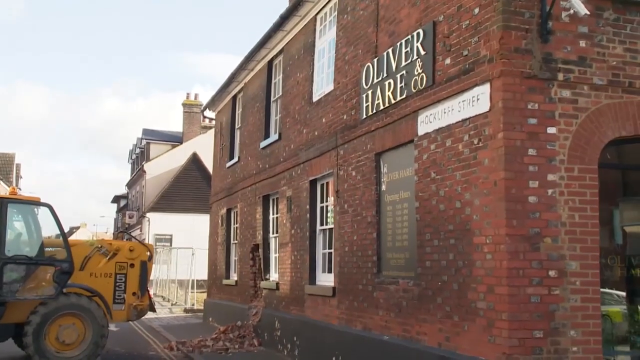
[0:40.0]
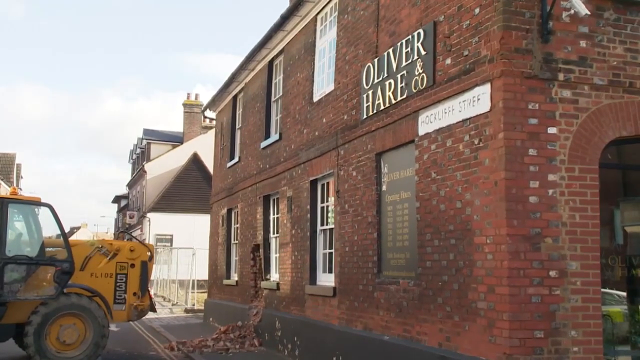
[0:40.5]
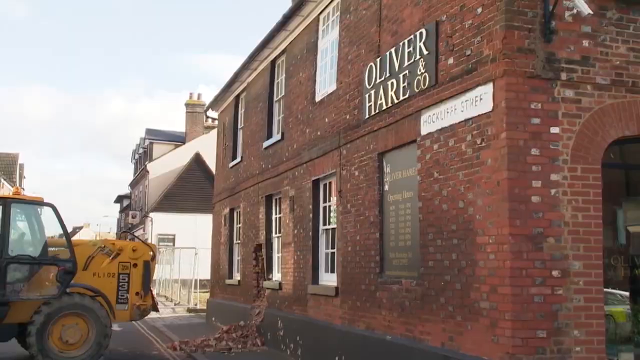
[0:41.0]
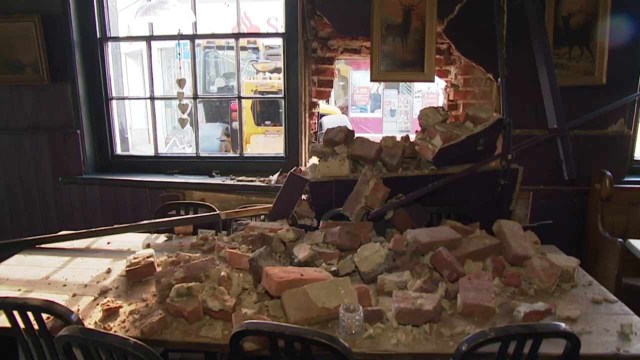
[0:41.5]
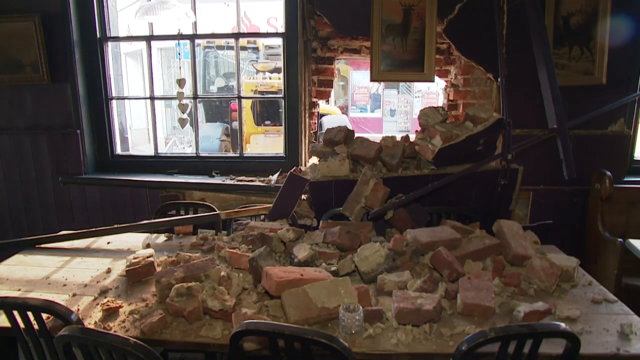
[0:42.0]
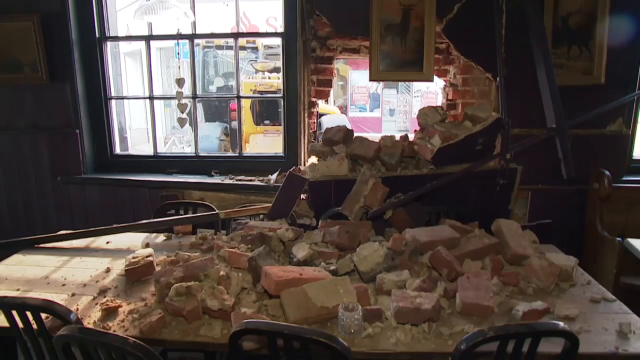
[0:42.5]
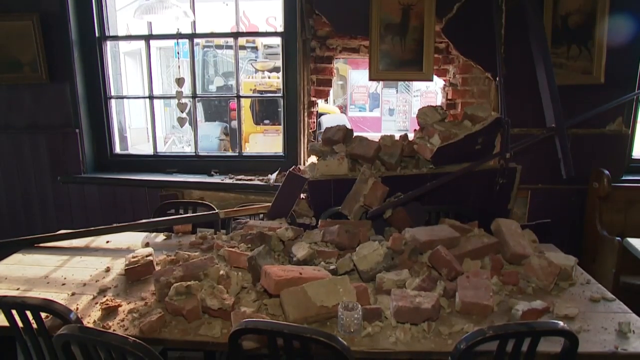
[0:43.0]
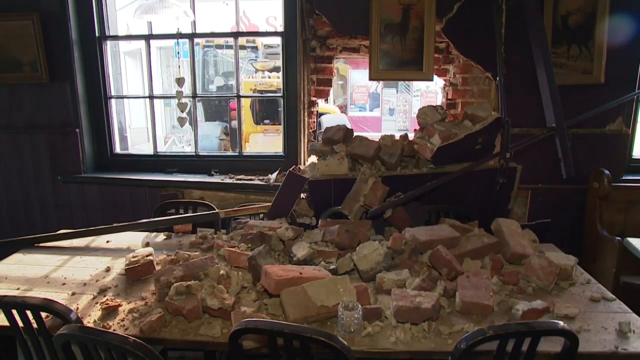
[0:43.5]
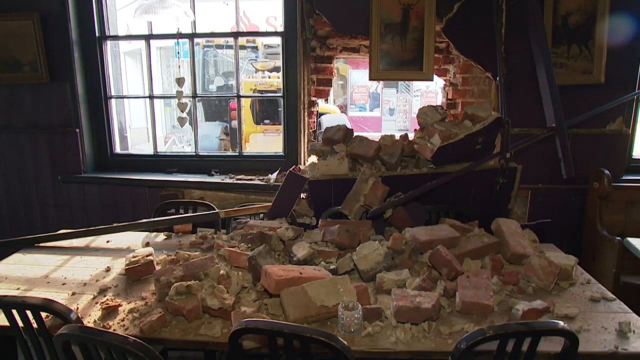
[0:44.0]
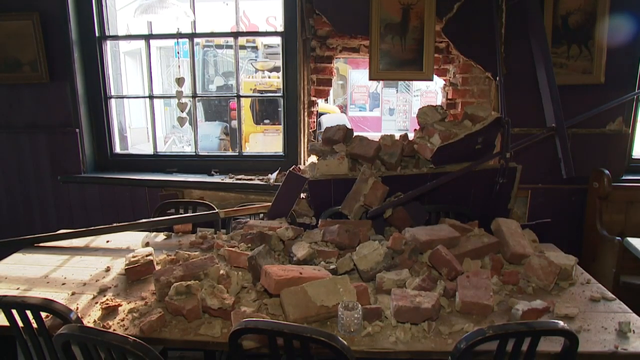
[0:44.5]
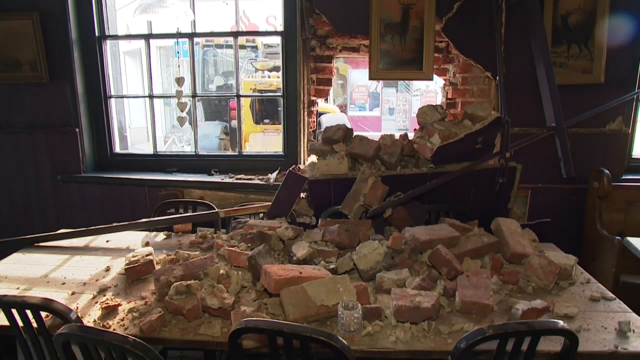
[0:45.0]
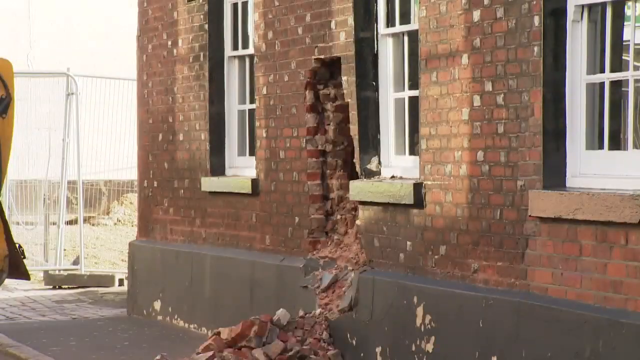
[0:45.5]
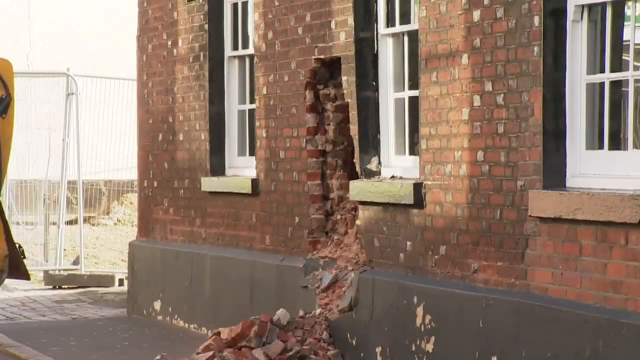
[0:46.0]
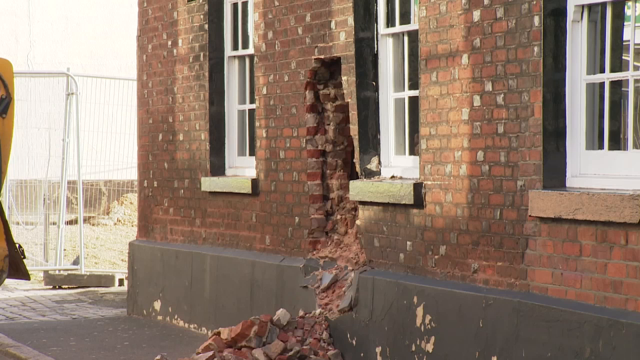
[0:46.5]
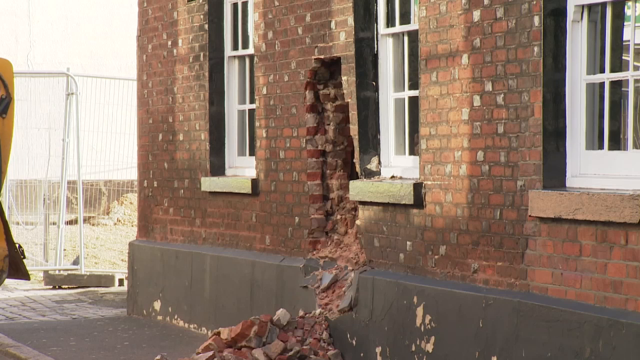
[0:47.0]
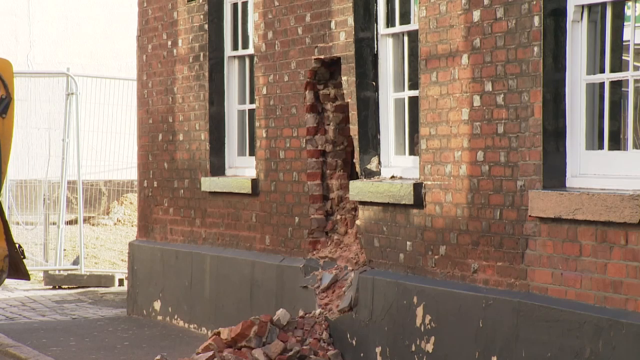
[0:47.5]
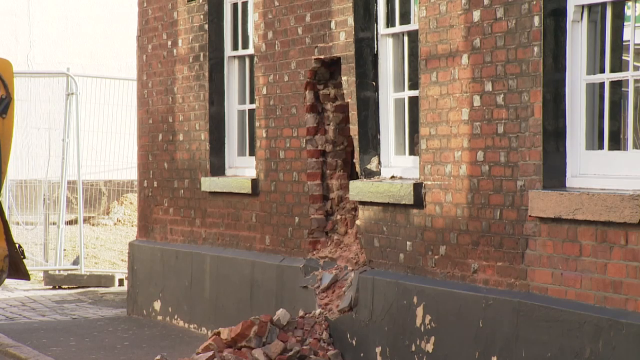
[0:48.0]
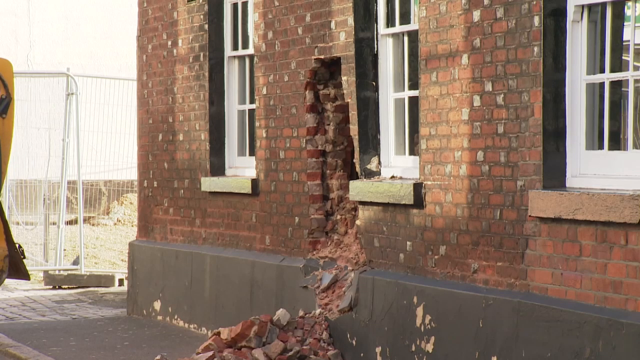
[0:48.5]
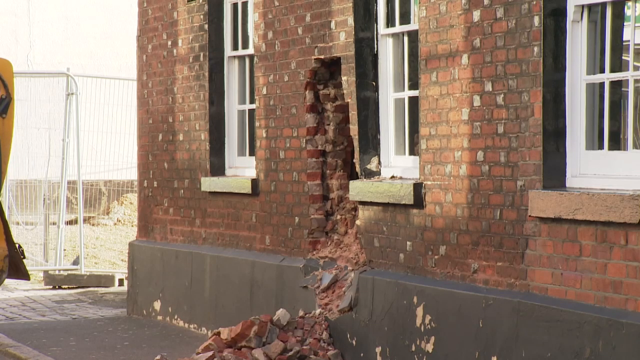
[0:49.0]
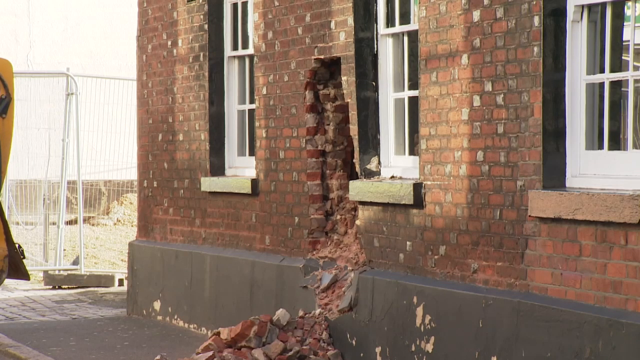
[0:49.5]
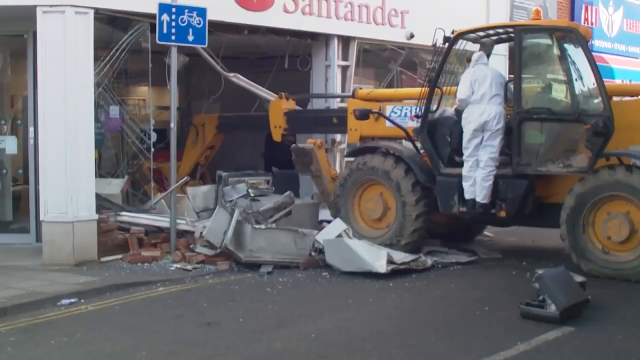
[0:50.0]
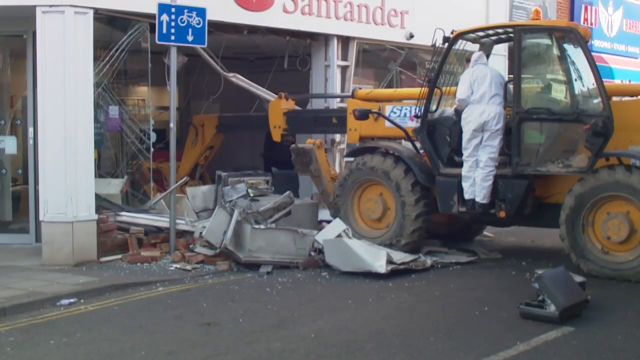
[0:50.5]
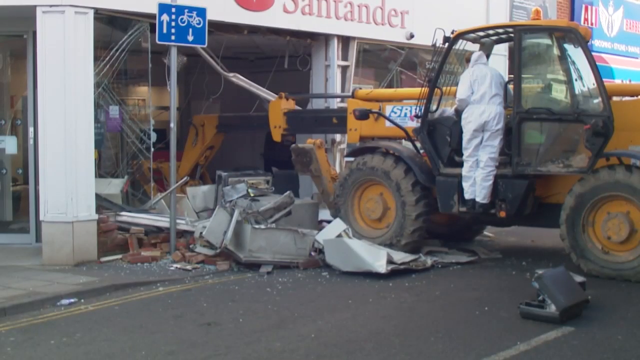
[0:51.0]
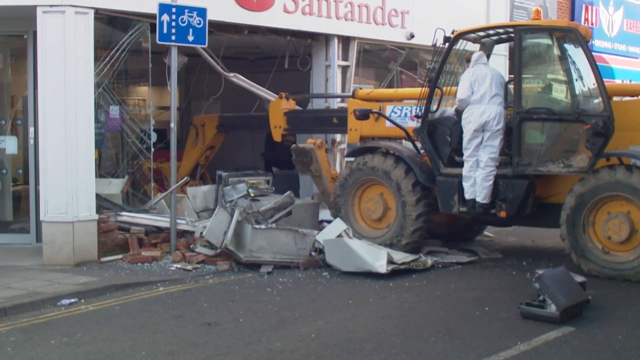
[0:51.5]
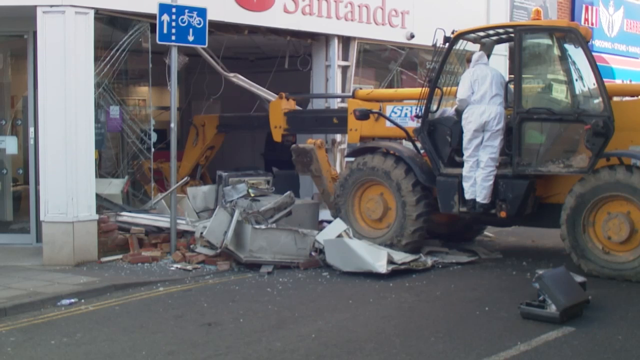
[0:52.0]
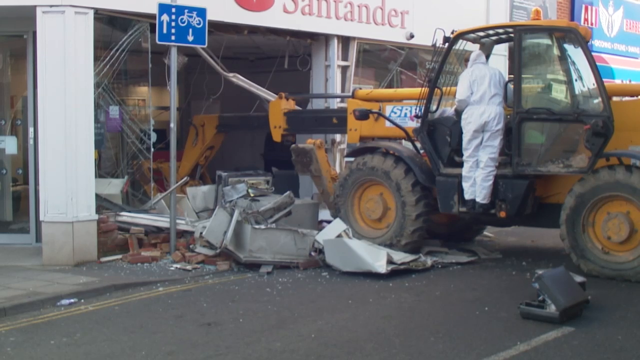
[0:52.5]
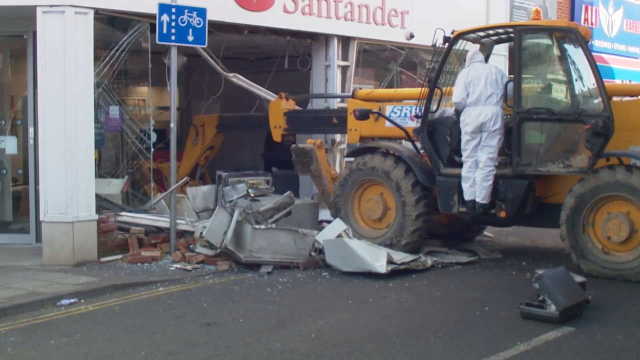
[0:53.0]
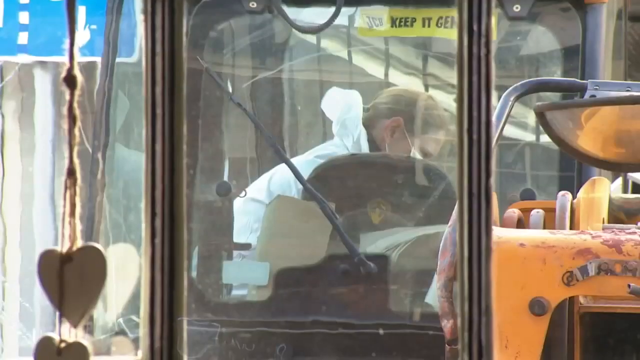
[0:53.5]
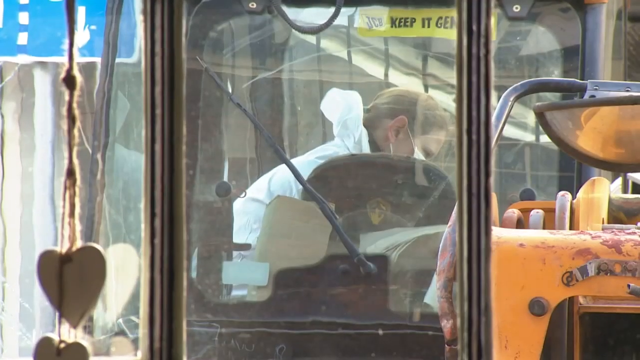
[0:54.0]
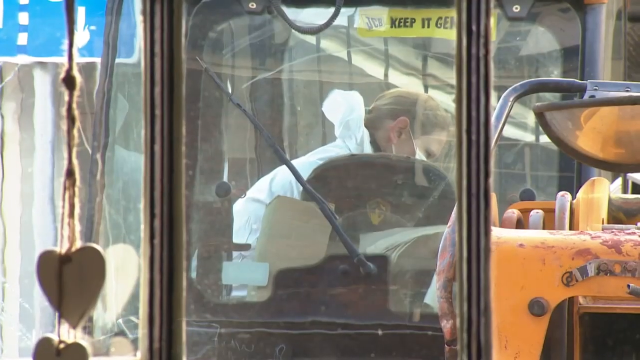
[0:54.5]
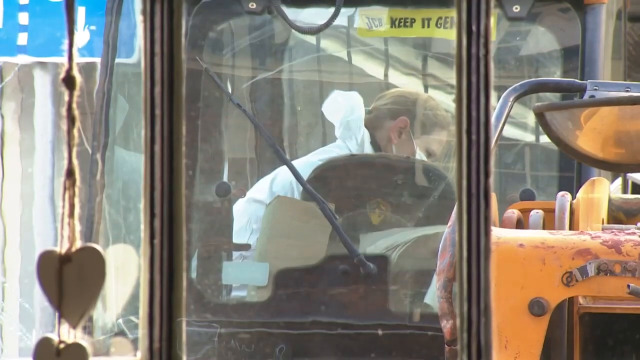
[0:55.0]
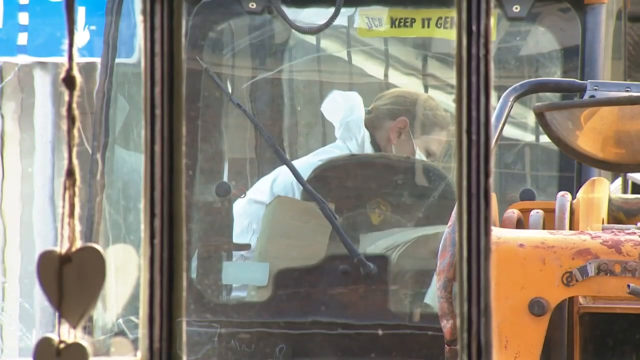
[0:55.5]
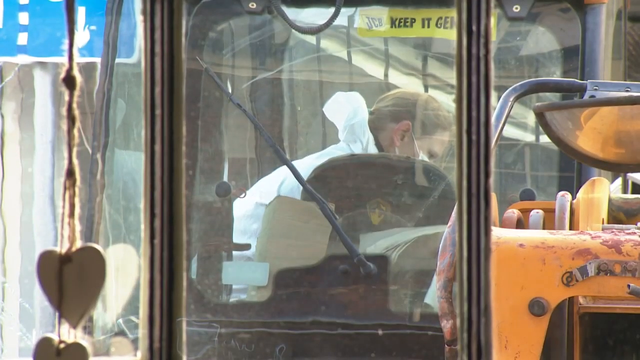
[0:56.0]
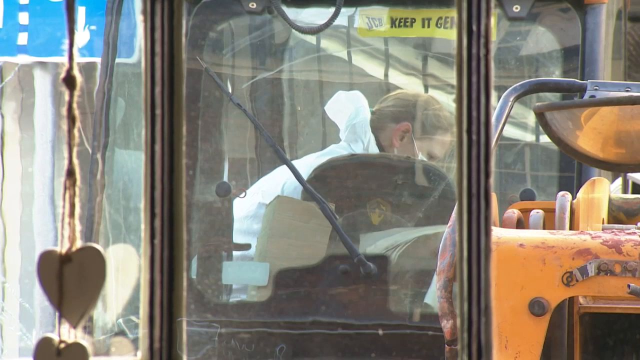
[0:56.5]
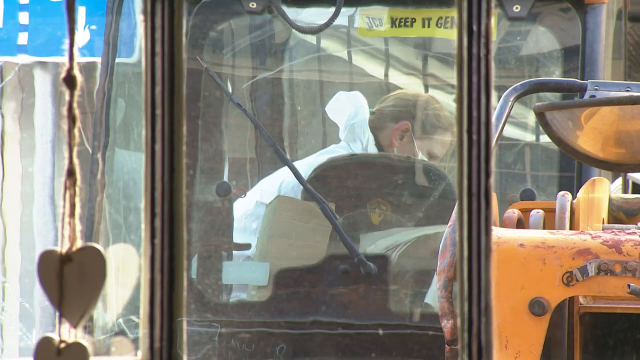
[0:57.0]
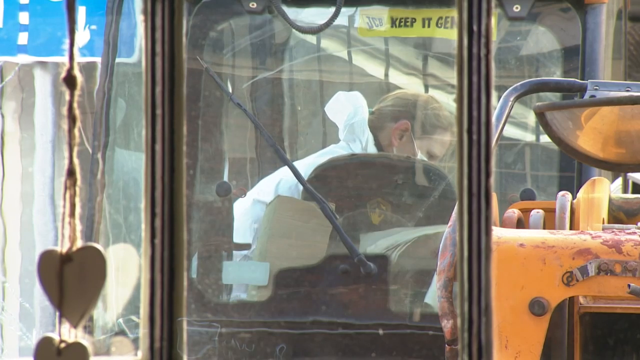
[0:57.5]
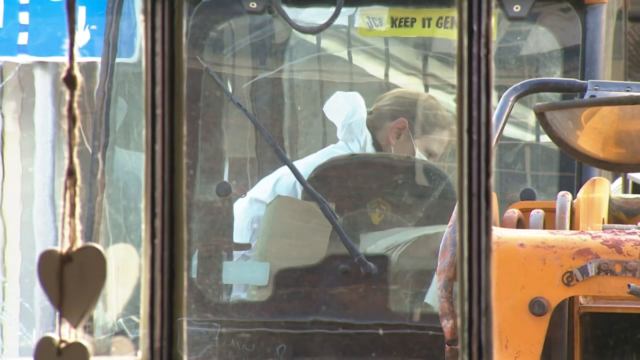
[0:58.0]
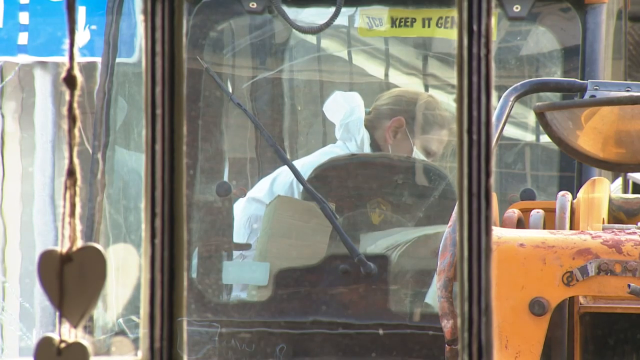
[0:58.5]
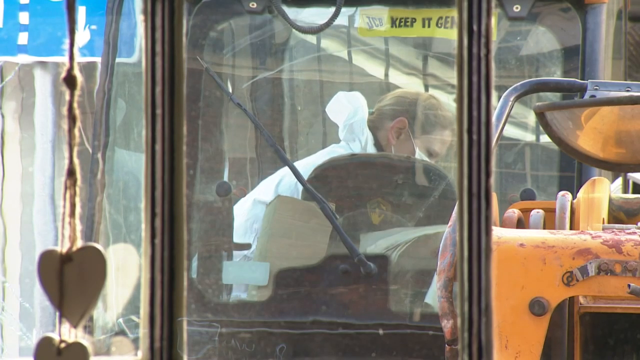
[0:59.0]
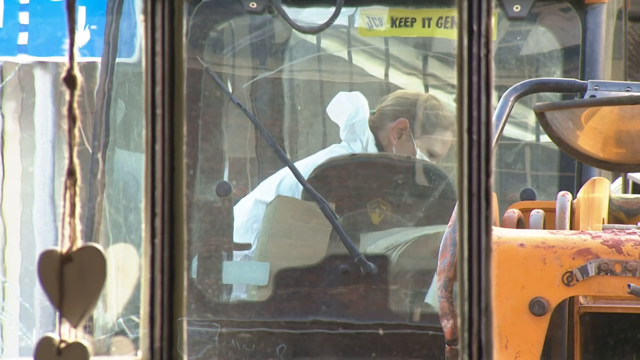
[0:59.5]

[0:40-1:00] The building on the opposite side of the street from the one the tractor vehicle drove through is shown. It is named Oliver Hare & Co. and is a double-story old red brick building with white window shutters. It looks like this building was also hit: inside it, white bricks, red bricks and brown bricks lie on what looks like a table, and portraits are still hanging on the wall. Through a hole in the wall the building on the opposite side of the street is visible, with broken bricks tumbling inwards. The hole in the red brick wall is then shown from the outside. There is also a dent in the dark grey part and the foundational part of the building.